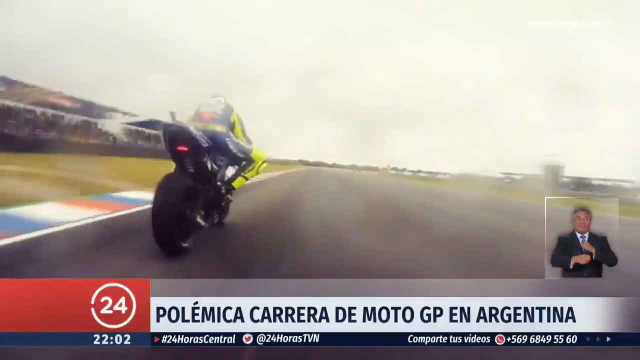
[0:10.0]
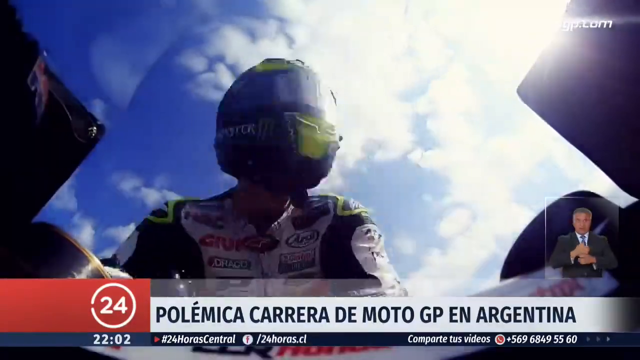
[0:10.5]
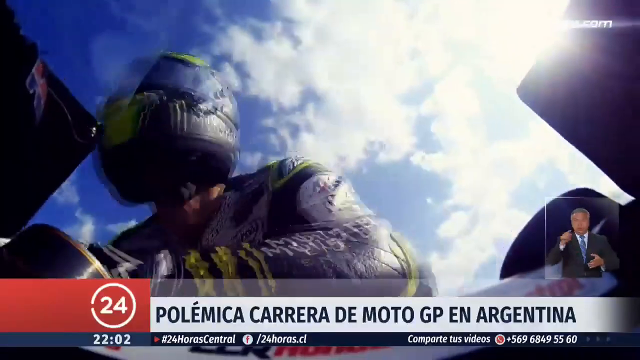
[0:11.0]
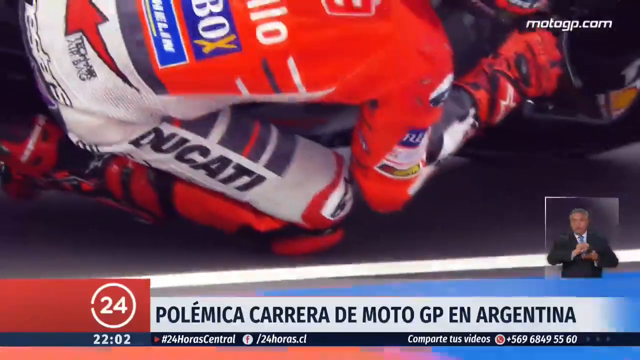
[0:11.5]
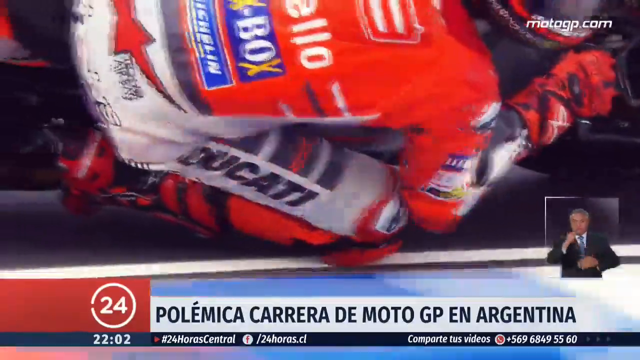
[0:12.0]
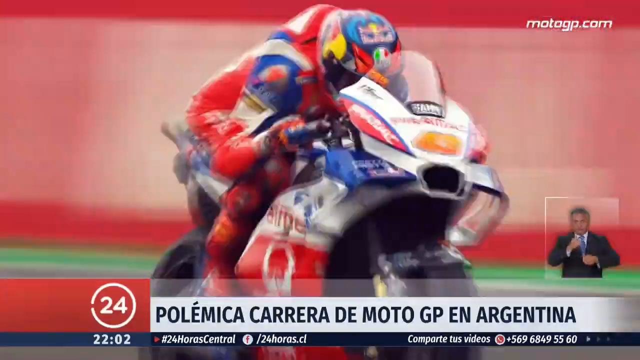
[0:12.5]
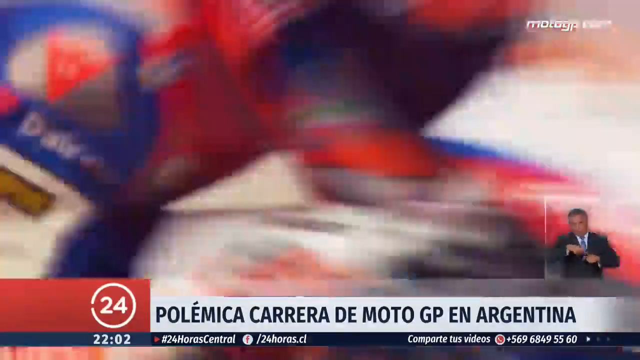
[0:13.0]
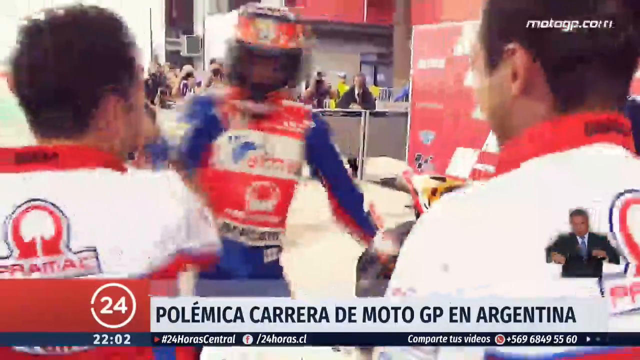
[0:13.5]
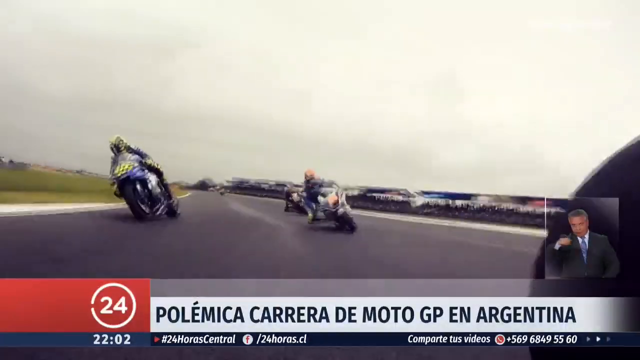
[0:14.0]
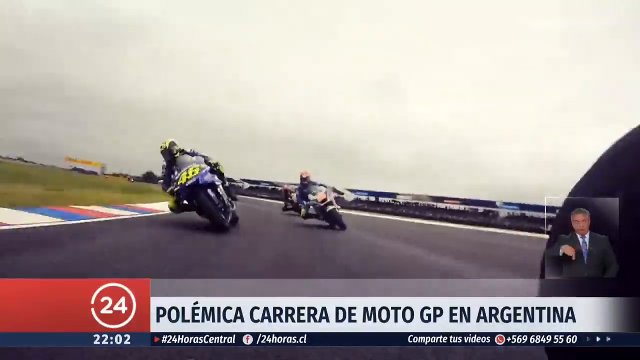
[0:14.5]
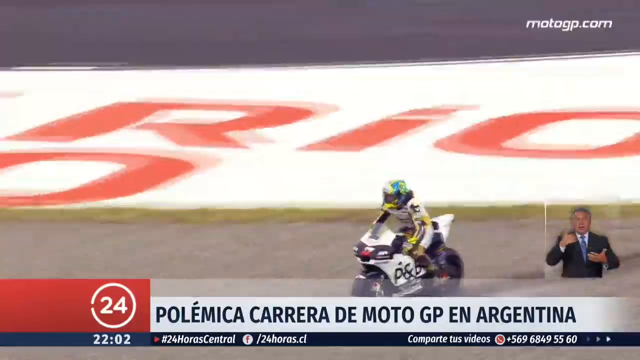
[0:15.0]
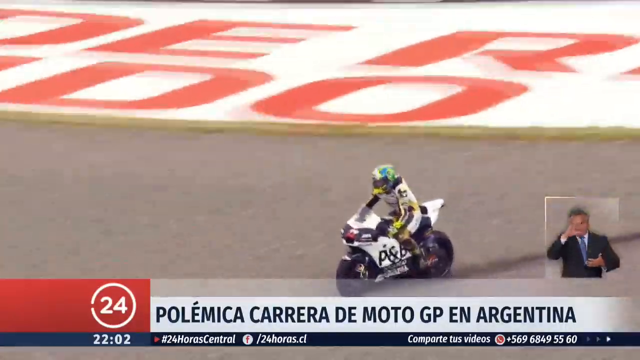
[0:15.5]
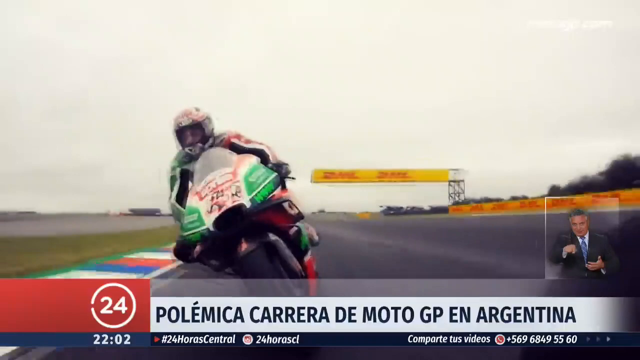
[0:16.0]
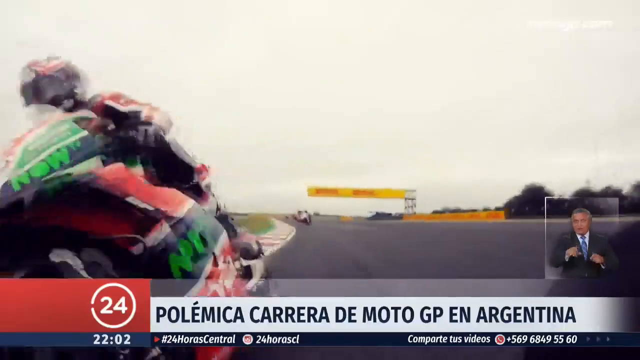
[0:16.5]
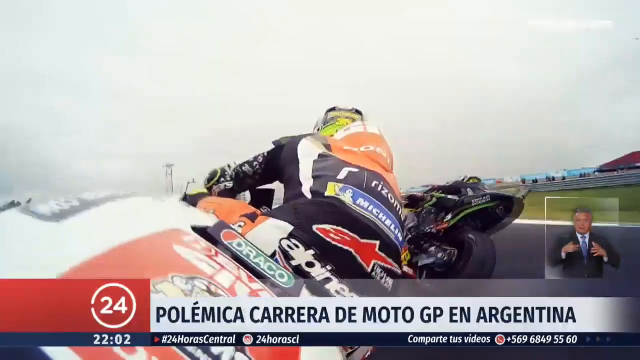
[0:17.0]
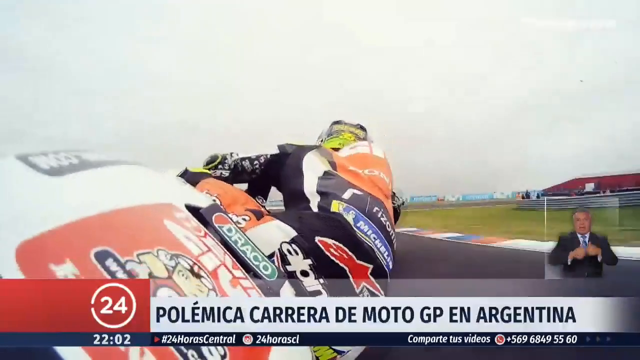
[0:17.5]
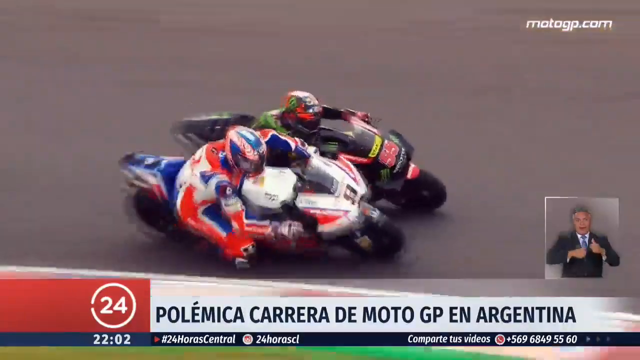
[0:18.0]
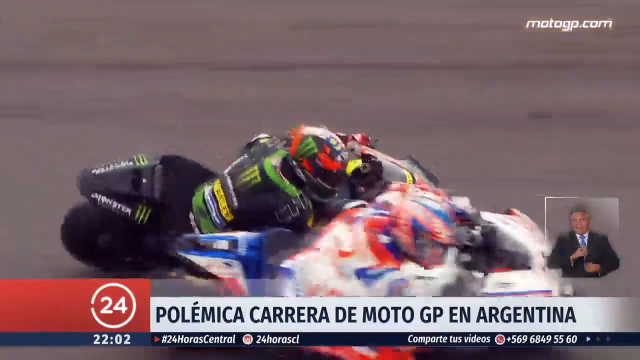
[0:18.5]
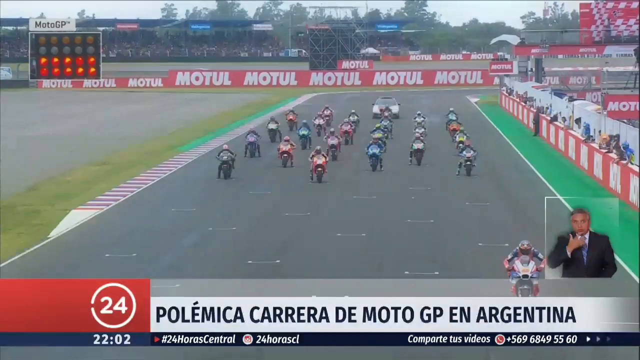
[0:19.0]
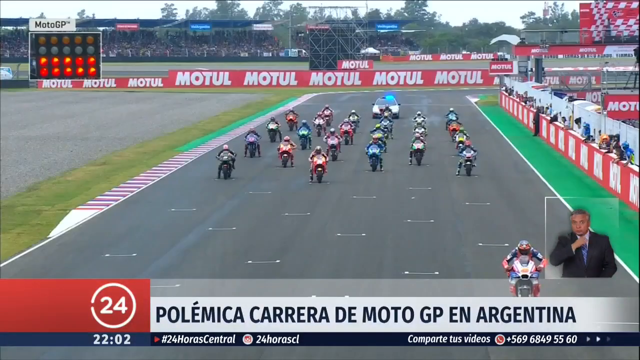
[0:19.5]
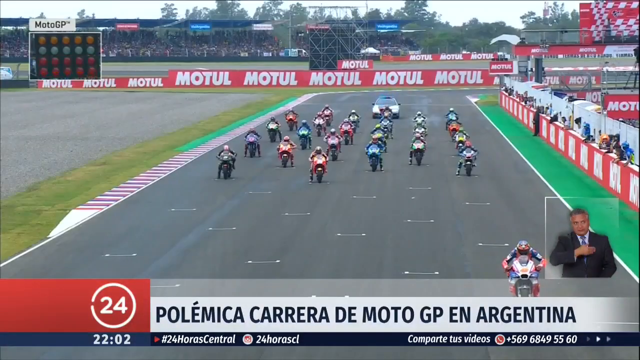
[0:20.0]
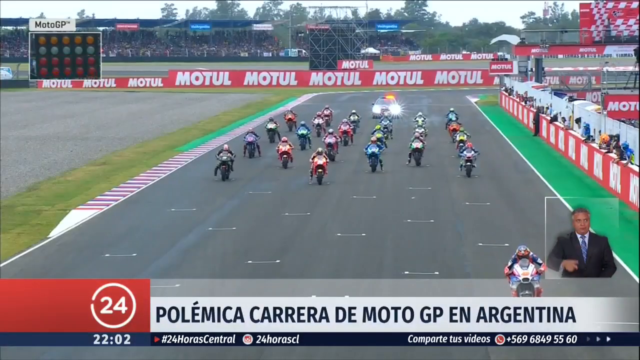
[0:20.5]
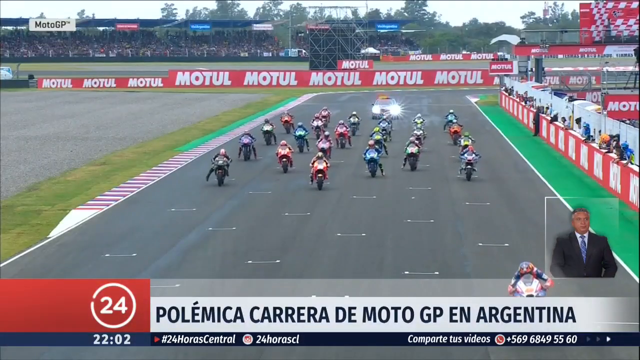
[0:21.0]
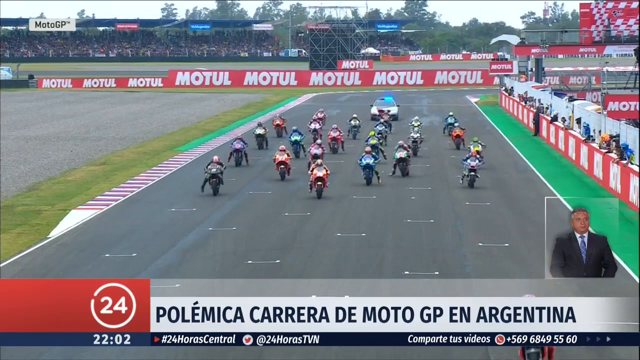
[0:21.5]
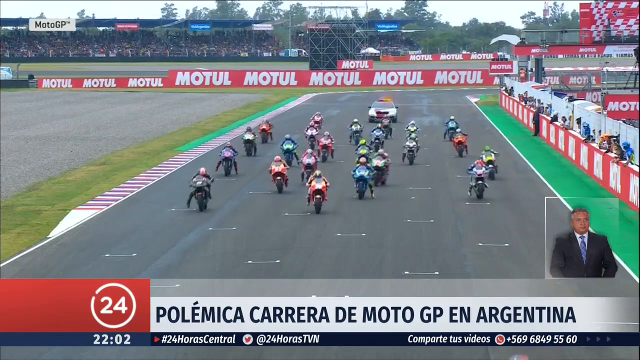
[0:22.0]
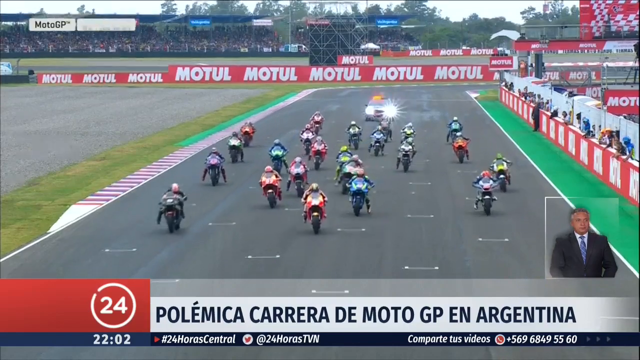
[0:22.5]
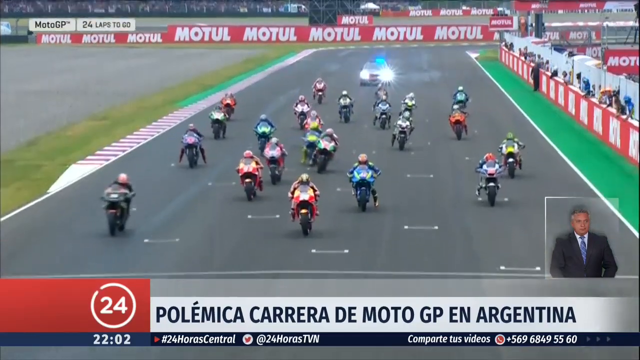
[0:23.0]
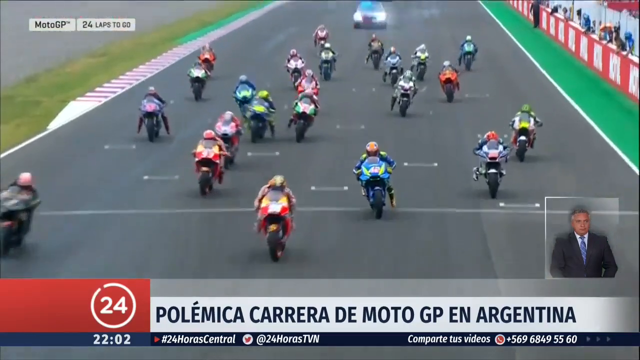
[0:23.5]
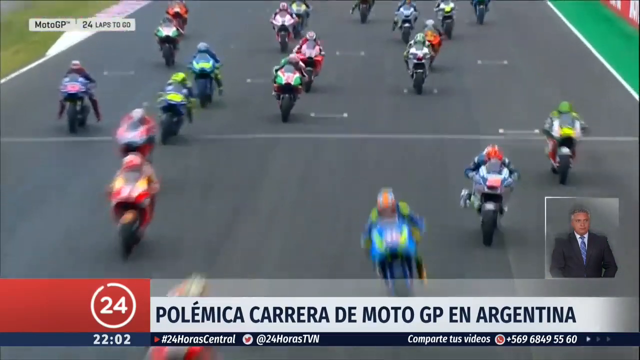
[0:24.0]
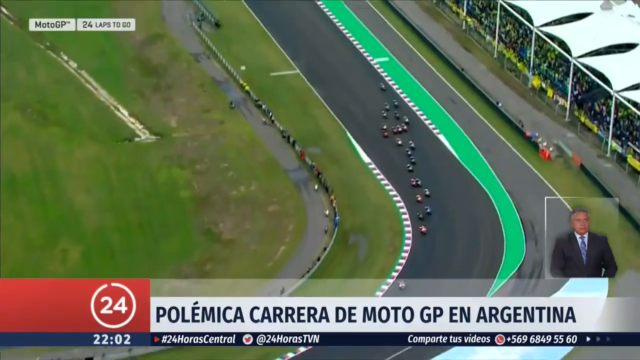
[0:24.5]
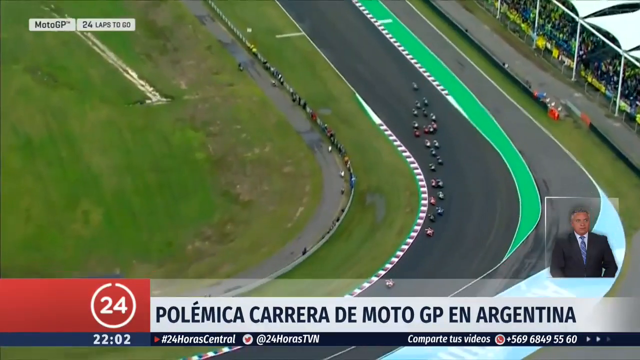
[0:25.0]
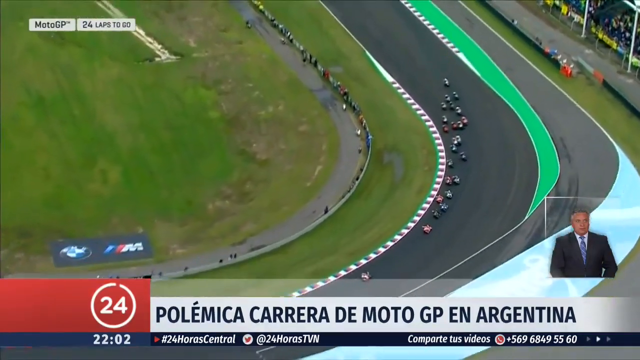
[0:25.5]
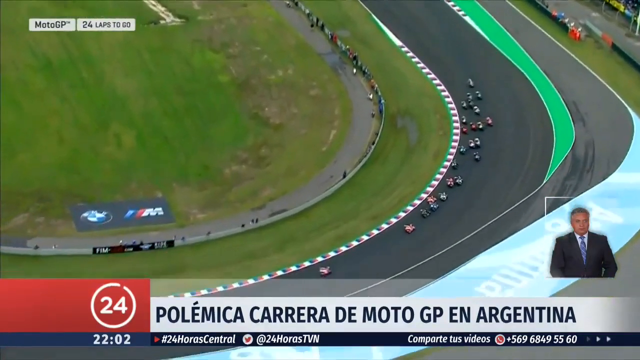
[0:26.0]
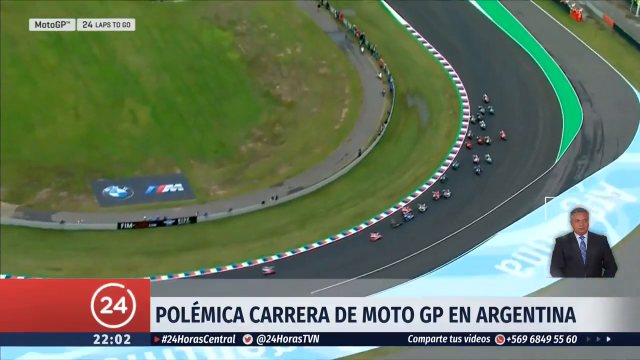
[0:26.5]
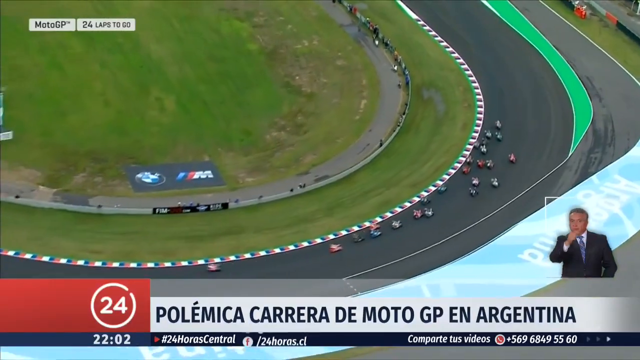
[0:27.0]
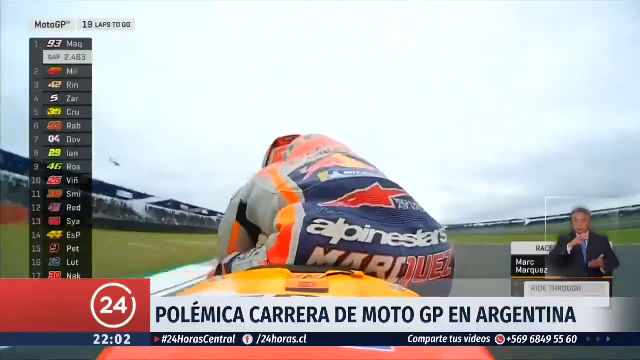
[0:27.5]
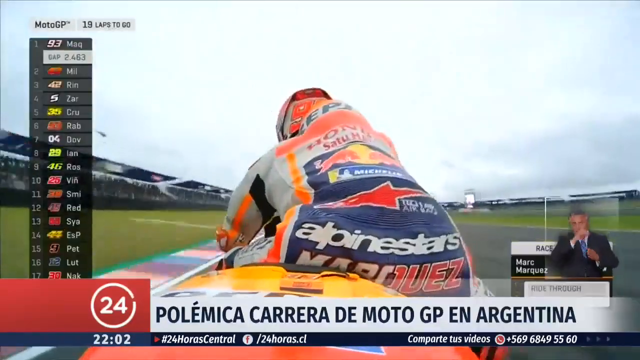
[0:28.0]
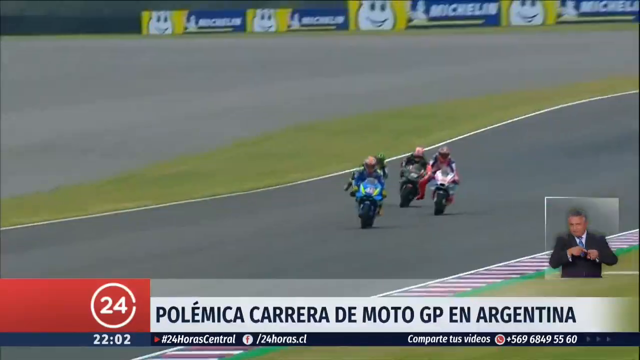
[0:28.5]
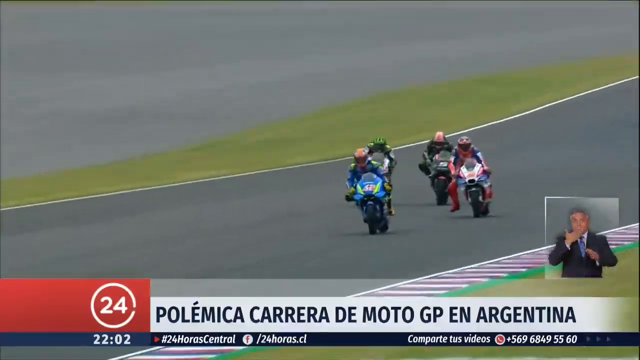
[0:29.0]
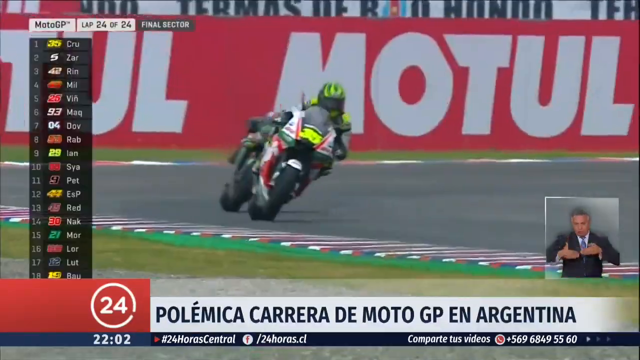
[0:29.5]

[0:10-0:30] A motorcycle goes down the racetrack while a reporter or sign language person in a suit appears on the right side of the screen. The skies are gray, and there are colors on the racetrack, in the grassy area and in the stands, with some people visible. A low camera view points upward at a racer, with clouds and a little blue in the sky. A motorcycle racer leans deeply to the right, wearing an orange and white shirt covered in sponsors, including Ducati, Michelin and a few others. A front view shows the same racer, with a yellow banner in the back, cloudy skies and a sign language interpreter on the right side. There is what looks like hay bales, though they might just be signs, along with borders, orange color and a few trees in the background. A back view of a rider shows the sponsors Oroco and Michelin on the back of the jersey. Two motorcycle racers ride side by side: one motorcycle is white and blue, the other is black with some red, and that rider has green. Another view on a cloudy day shows MOTUL as a sponsor on the banners and barricades, a few people in the stands, and about 15 racers, possibly with a pace vehicle behind them, and one motorcycle way ahead.